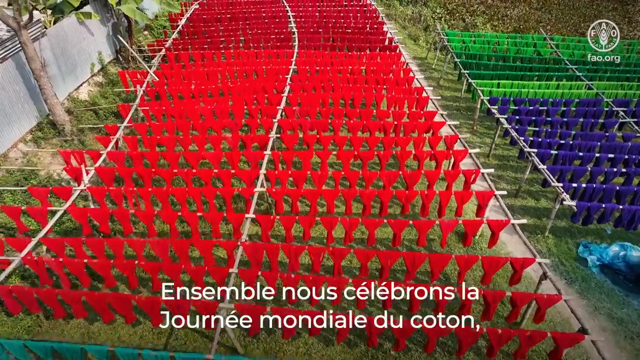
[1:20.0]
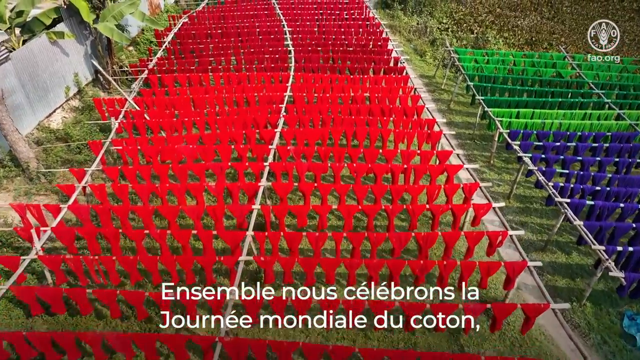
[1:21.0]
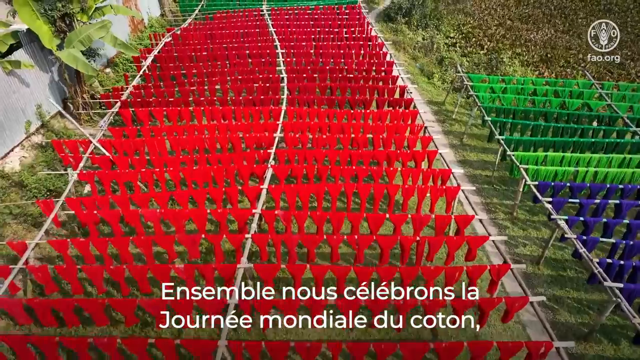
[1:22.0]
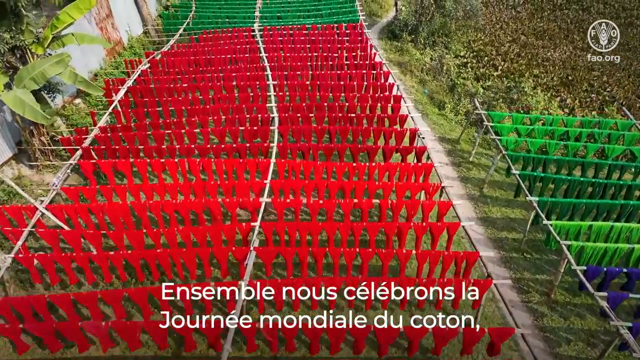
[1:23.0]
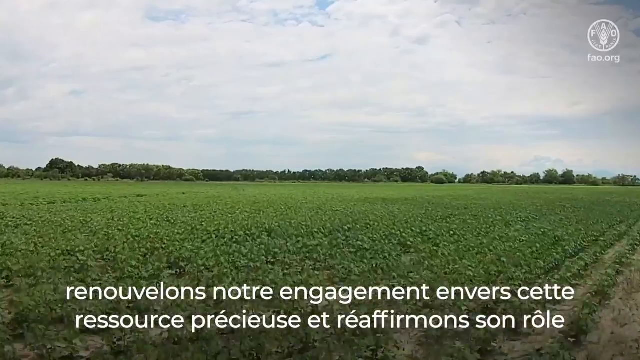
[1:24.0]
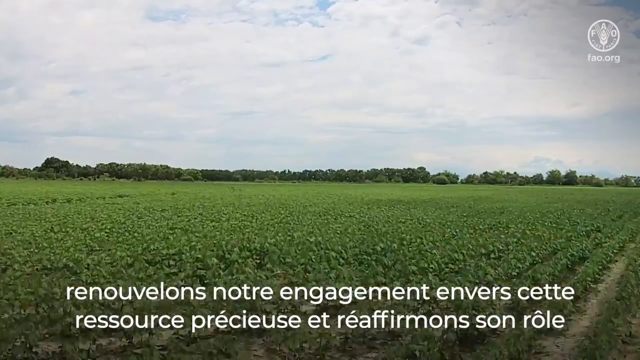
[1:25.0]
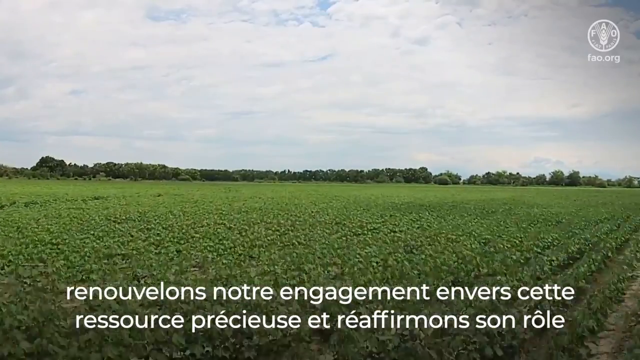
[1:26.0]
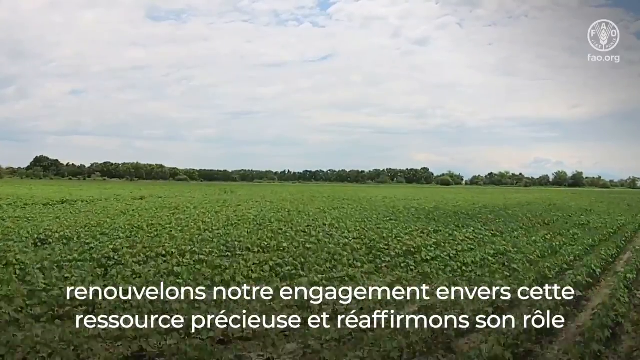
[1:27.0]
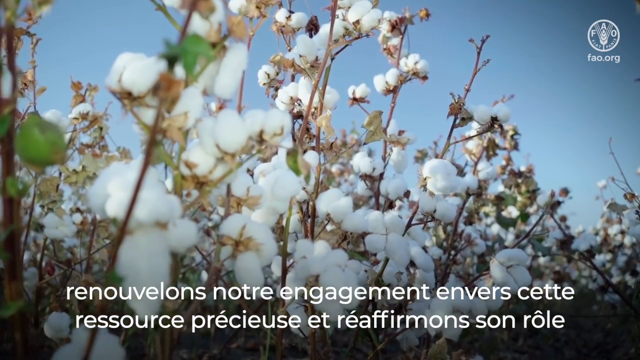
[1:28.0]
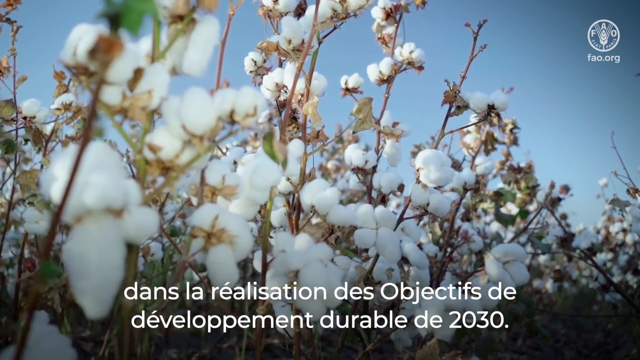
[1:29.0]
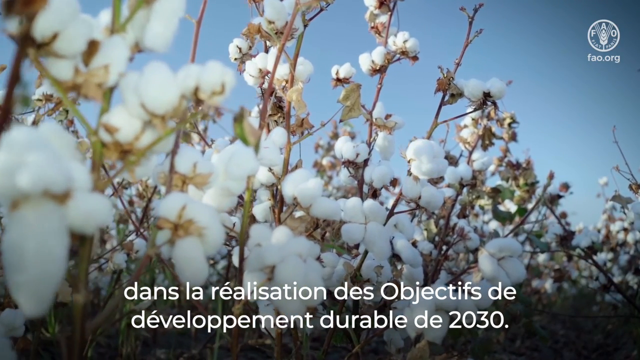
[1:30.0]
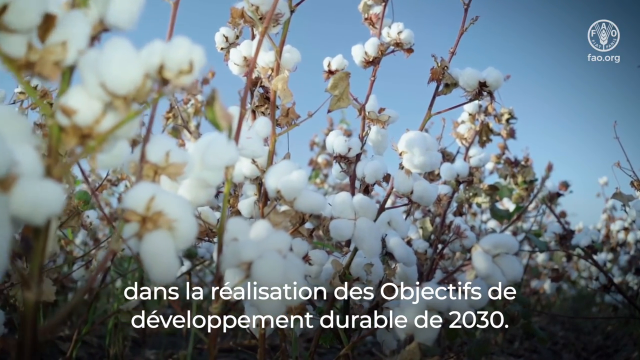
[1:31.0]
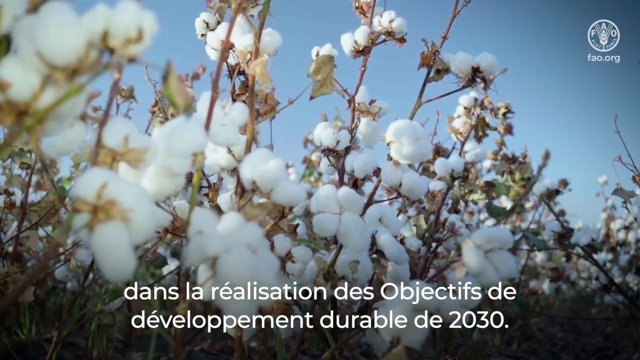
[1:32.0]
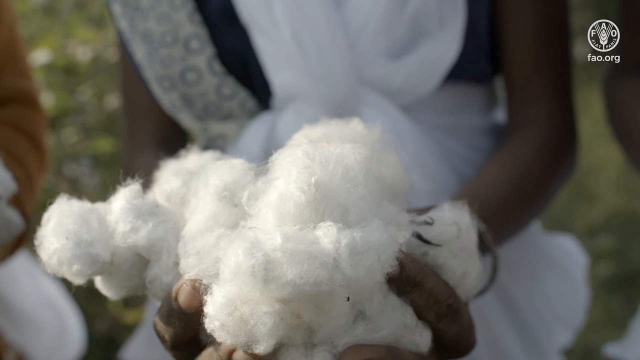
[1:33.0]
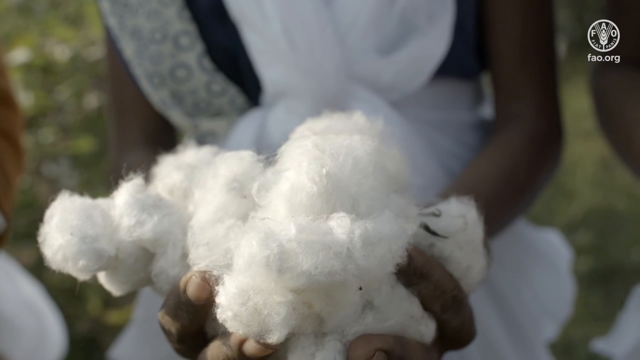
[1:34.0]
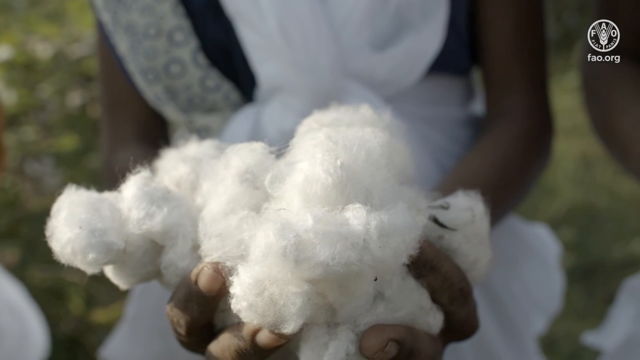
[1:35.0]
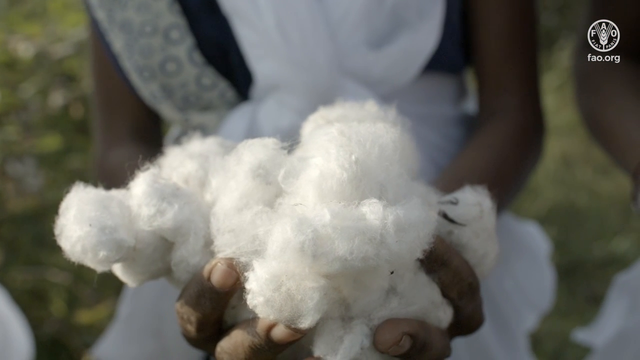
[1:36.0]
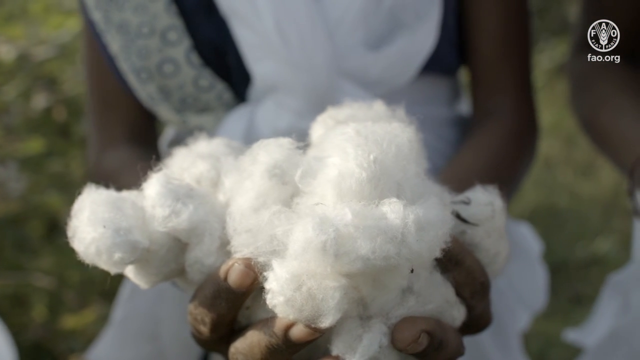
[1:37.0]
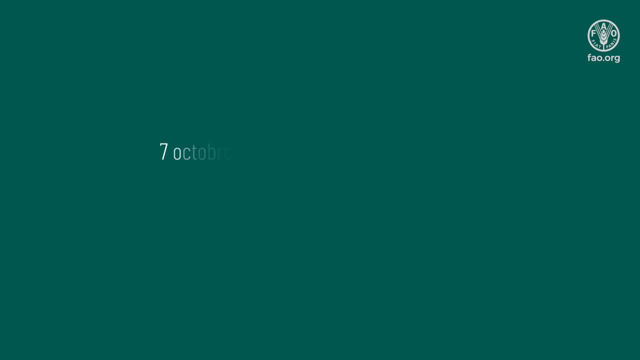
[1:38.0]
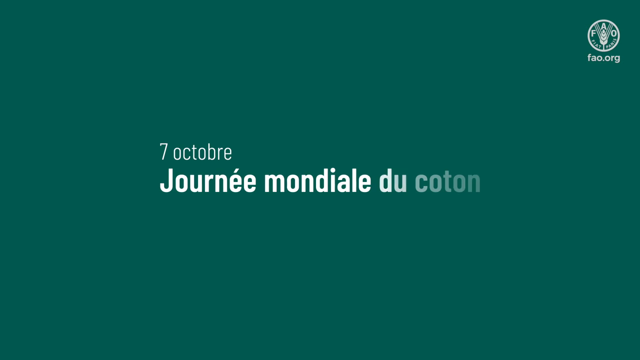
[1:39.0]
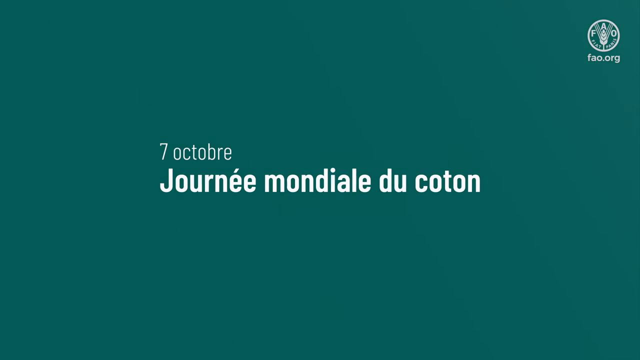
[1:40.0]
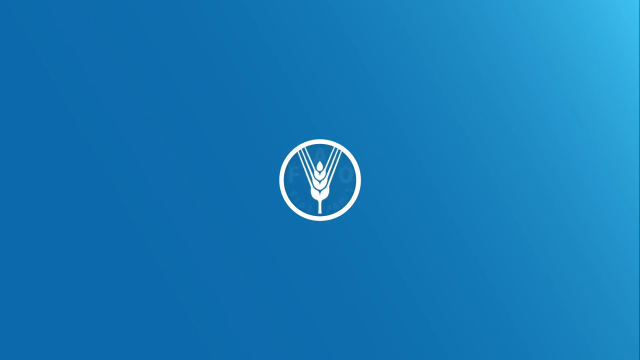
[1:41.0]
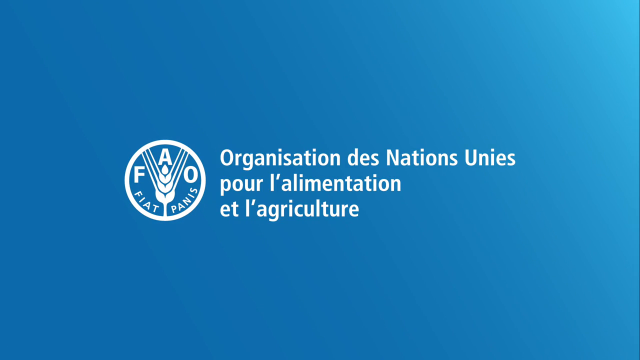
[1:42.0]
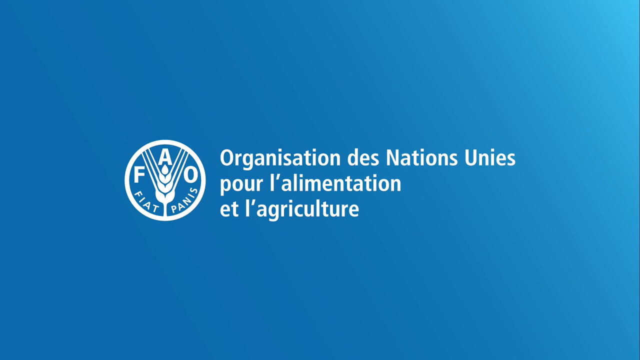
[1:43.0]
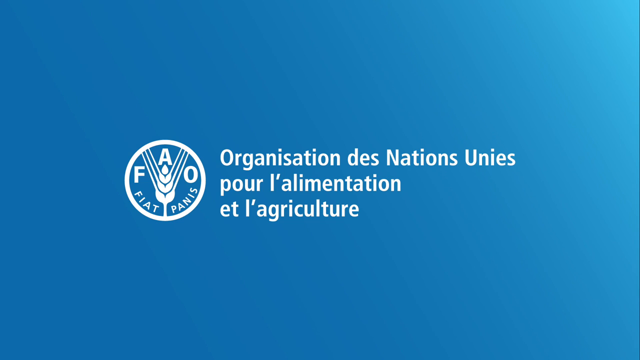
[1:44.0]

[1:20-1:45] Many different racks inside a field hold strings dyed different colors. Directly in view is a very long rack extending all the way to the top of the screen, with all of its strings dyed red. Off to the right is a similar rack whose top half of strings are dyed green and the other half a purple-to-blue toned color. At least five rows of the blue and purple tone are visible, while three different greens are visible: two lighter greens on the edges and a darker green in the middle. A panning shot of the cotton fields follows again, under a very bright, cloud-filled sky. The camera zooms in on the cotton plants, many of whose stalks have multiple buds of cotton. It then pans toward a close-up of two hands holding a large bundle of cotton. The video ends with text about something happening on October 7th and goes back to the logo with the circle and the piece of wheat in the middle.